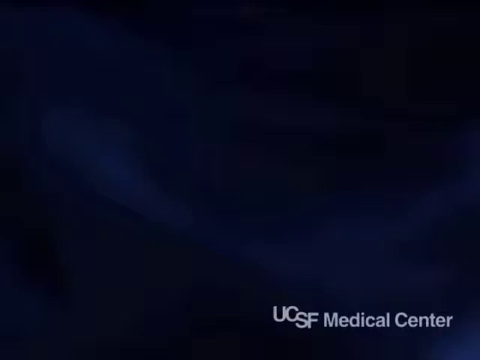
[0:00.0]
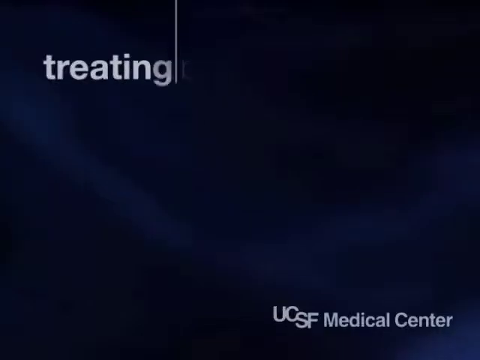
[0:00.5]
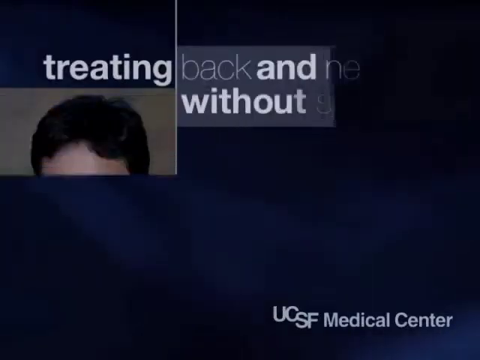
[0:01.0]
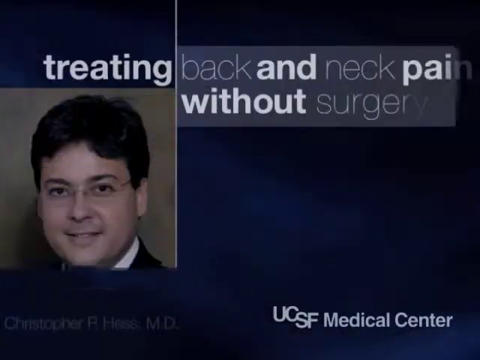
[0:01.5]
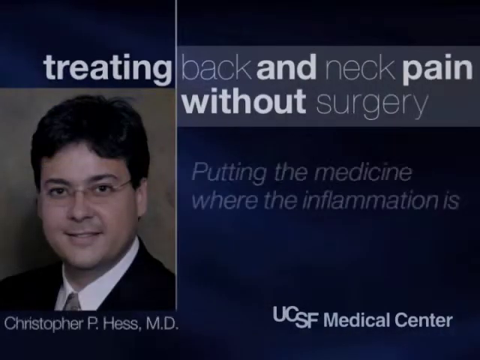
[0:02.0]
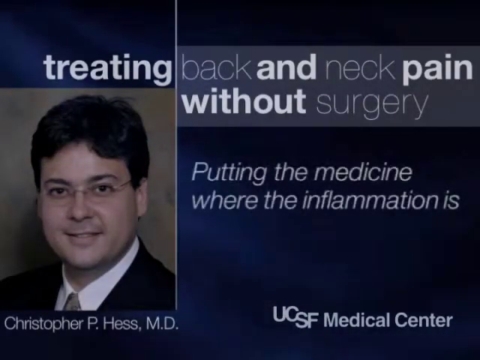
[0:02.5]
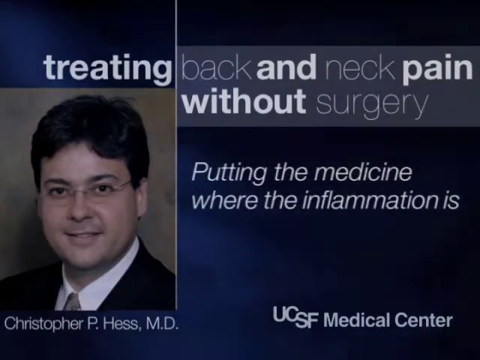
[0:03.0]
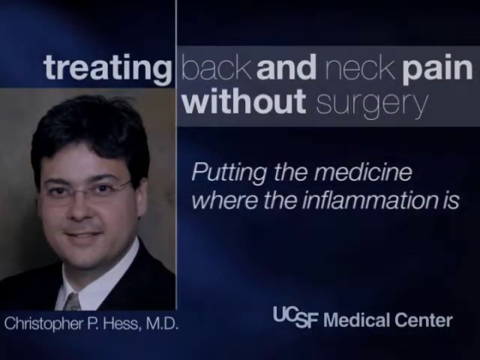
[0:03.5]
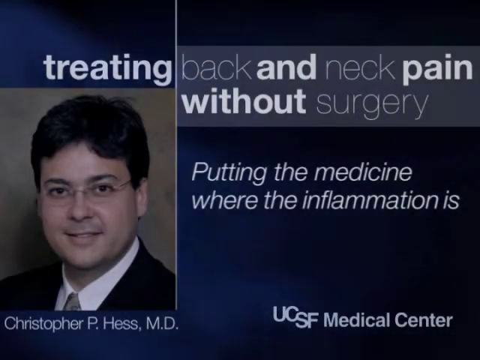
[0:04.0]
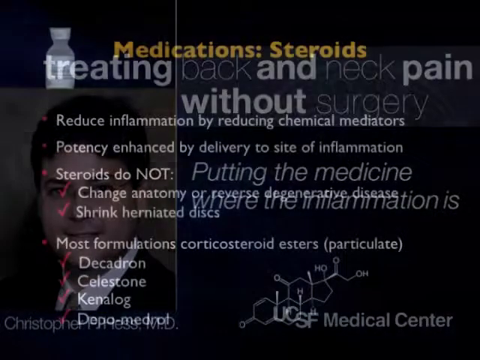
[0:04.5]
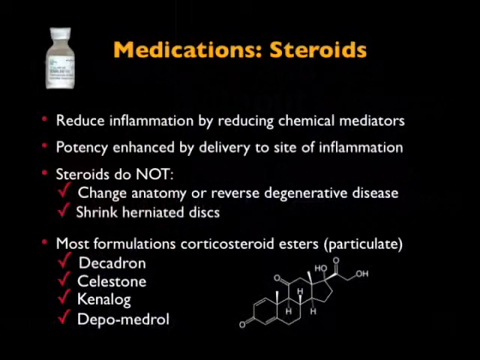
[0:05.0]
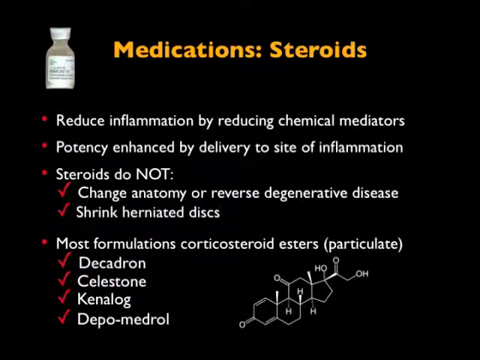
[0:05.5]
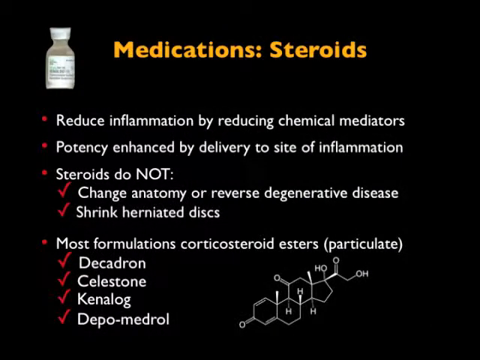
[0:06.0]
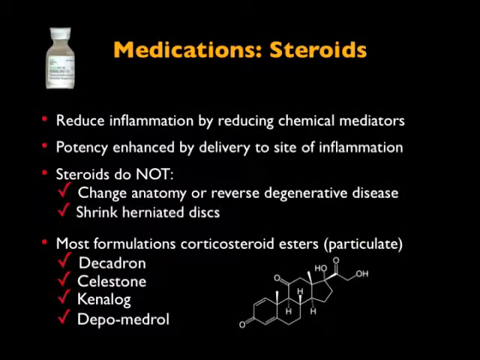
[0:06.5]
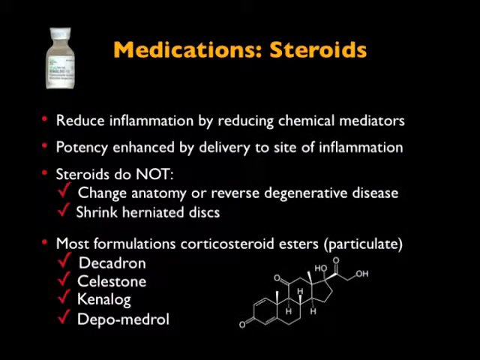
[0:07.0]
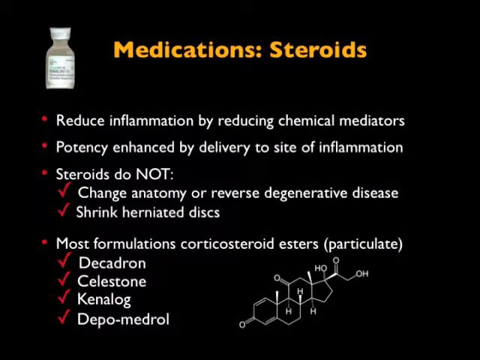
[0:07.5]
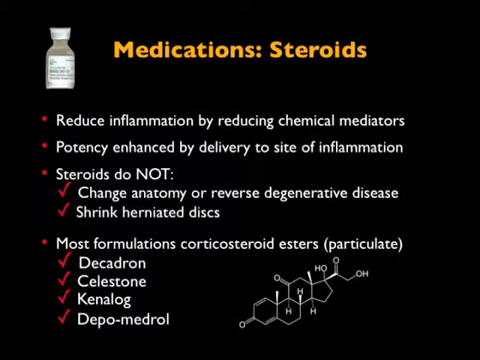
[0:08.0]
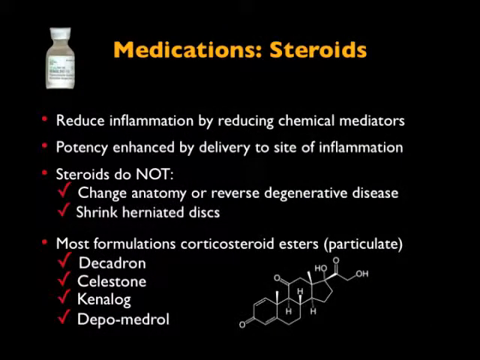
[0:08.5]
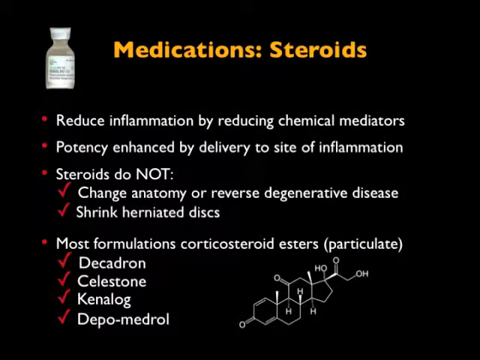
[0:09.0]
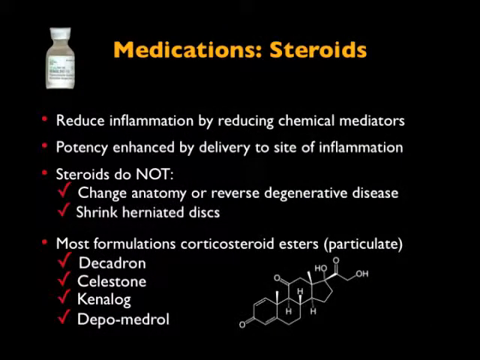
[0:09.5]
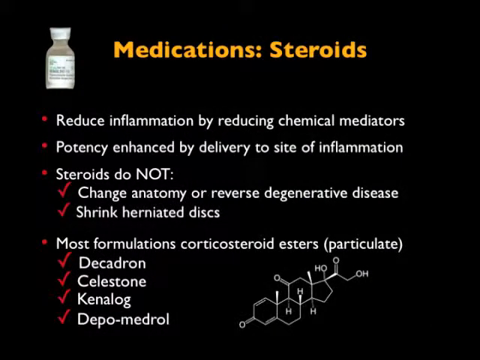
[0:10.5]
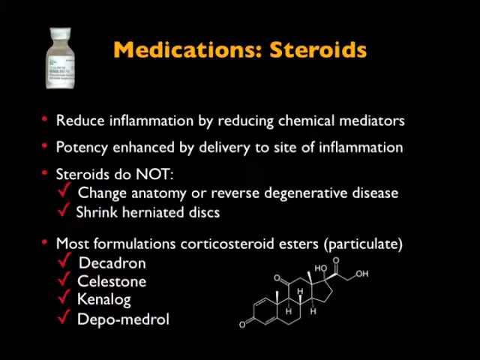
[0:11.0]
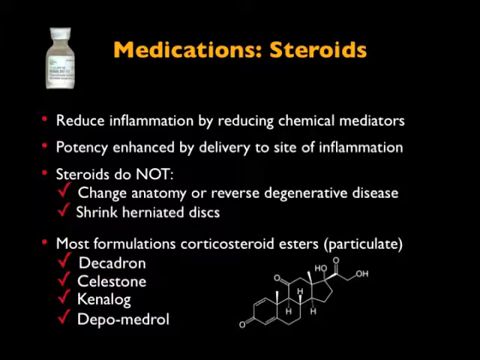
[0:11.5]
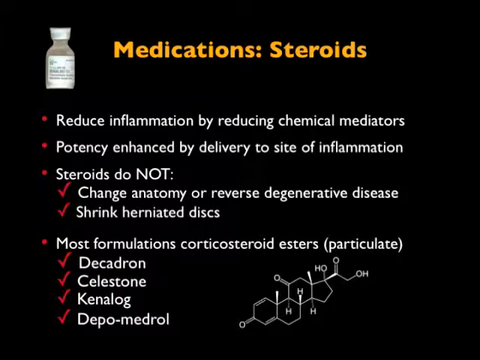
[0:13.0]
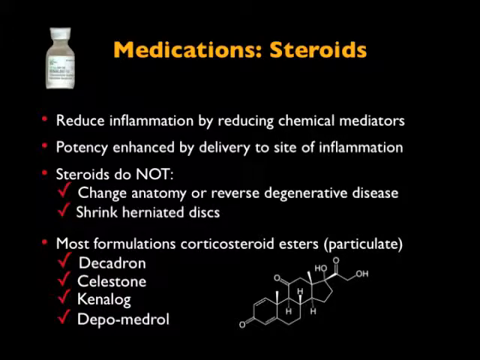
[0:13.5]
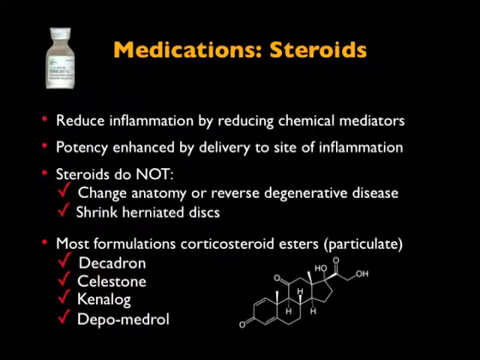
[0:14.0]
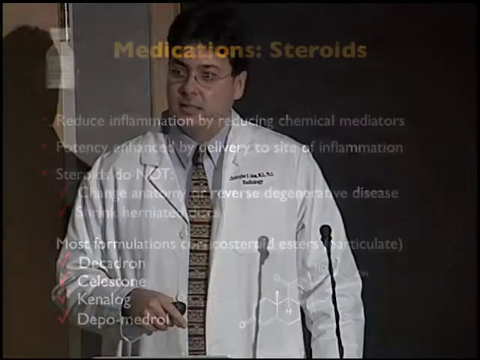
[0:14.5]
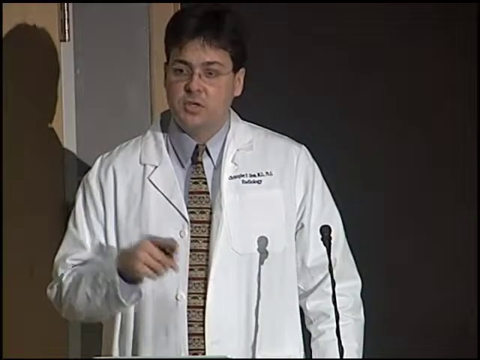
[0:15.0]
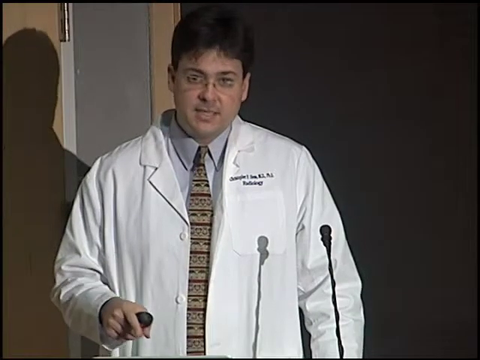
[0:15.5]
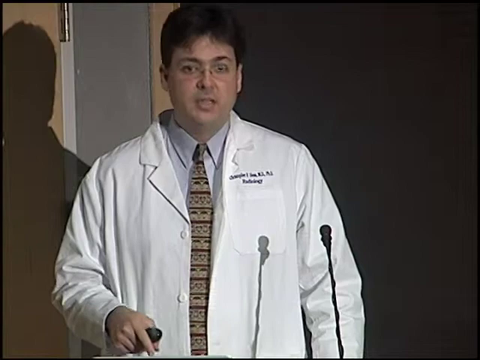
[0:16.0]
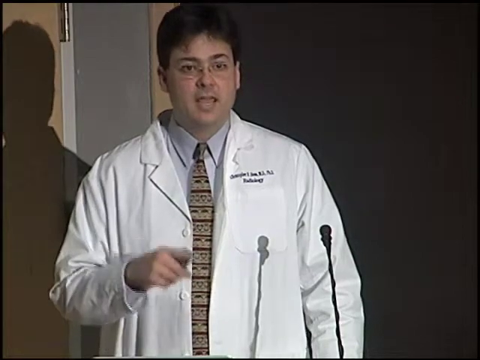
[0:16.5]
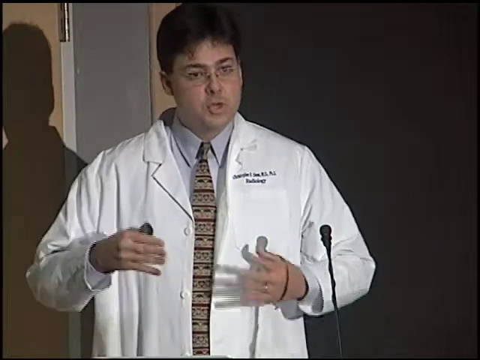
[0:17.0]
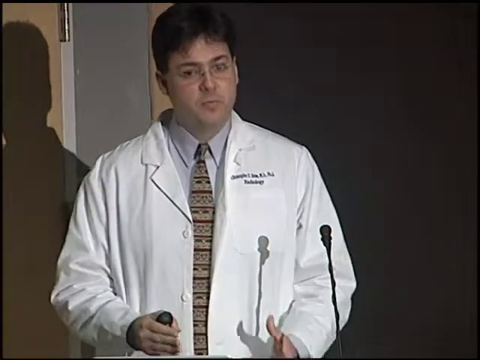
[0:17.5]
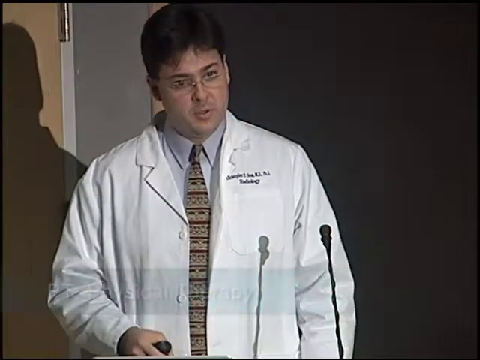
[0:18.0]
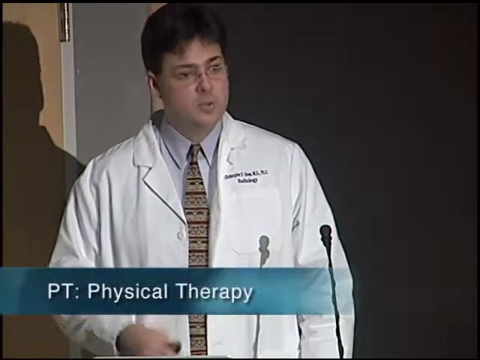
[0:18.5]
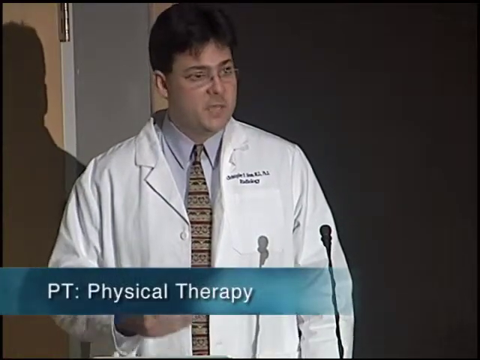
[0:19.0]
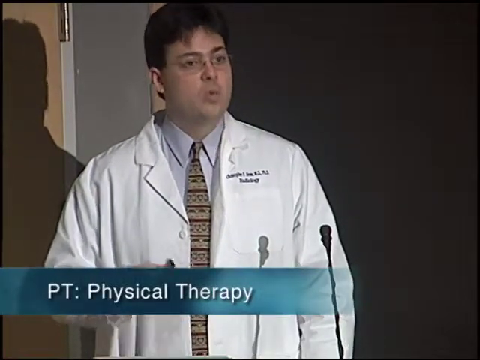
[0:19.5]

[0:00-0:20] In the bottom right-hand corner, white text reads "UCSF Medical Center." Further text reads "treating back and neck pain without surgery" and "putting the medicine where the inflammation is." There is an image of a doctor, probably the one who will be presenting. He wears glasses and has short black hair; the top part of his clothing is a blazer over a white button-down shirt, and he wears a tie. His name is Christopher P. Hess. The next slide has a black background with "medication steroids" in yellow. In white it reads "reduce inflammation by reducing chemical mediators," "potency enhanced by delivery to site of inflammation," "steroids do not change anatomy or reverse degenerative disease," "shrink herniated discs," and "most formulations," followed by a word ending in "esters," "(particulate)," "decadrone," "Celestone," "Kenalog" and "depo-medrol." Then the doctor starts talking, in footage that looks like it is from the 1990s, and text reads "PT, physical therapy."